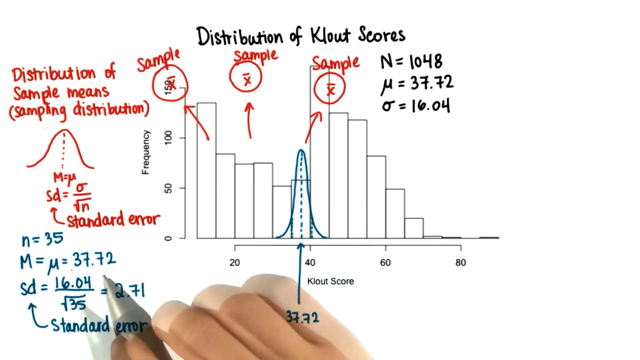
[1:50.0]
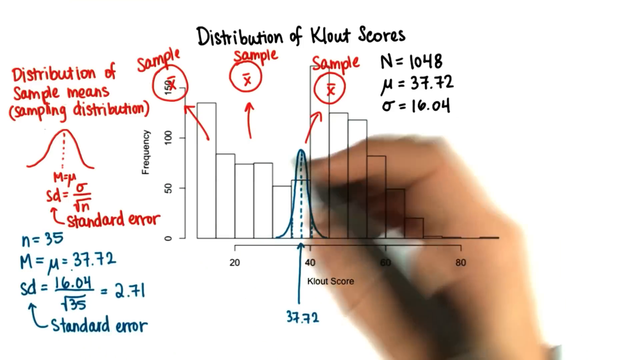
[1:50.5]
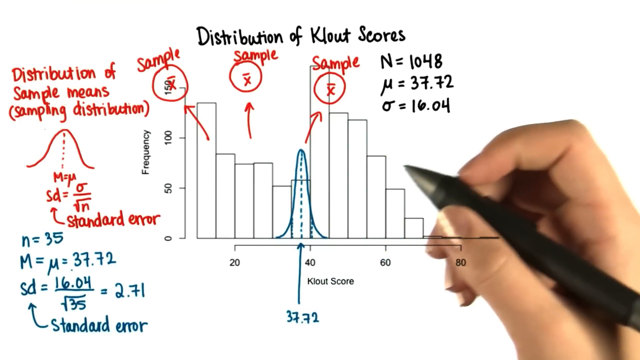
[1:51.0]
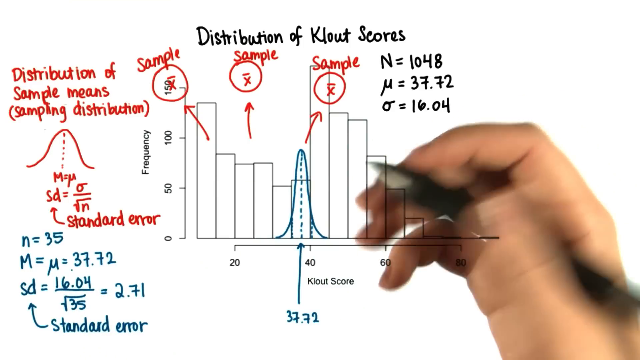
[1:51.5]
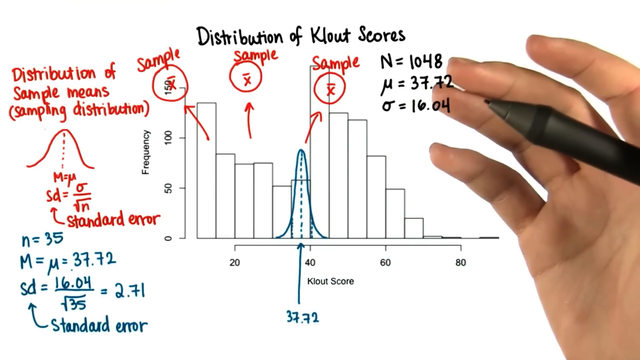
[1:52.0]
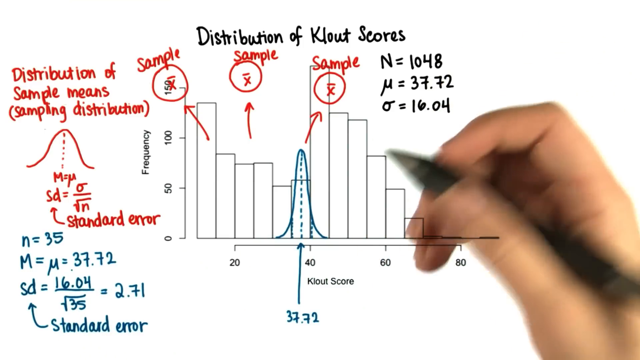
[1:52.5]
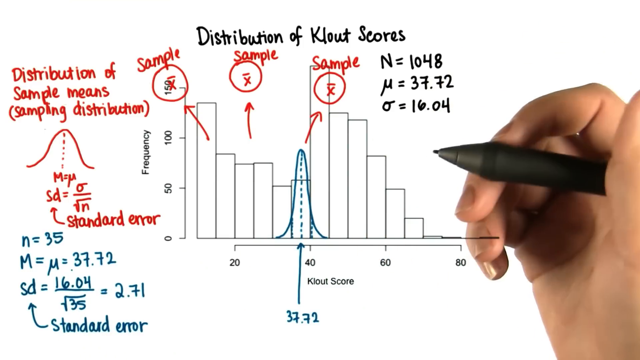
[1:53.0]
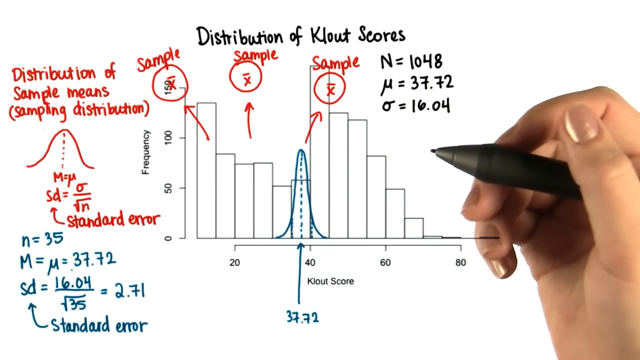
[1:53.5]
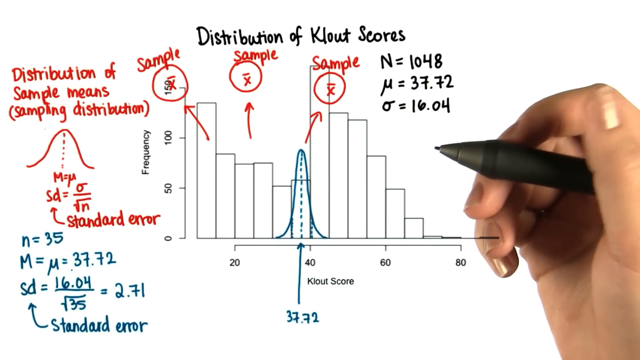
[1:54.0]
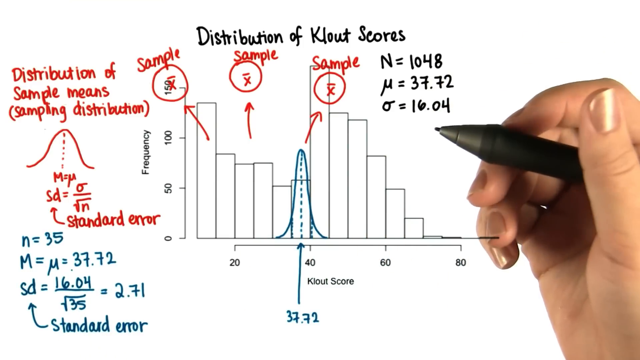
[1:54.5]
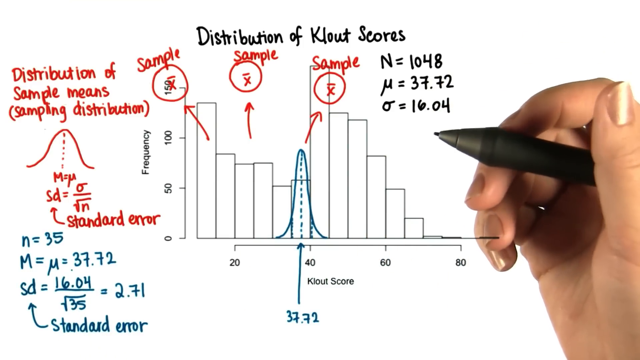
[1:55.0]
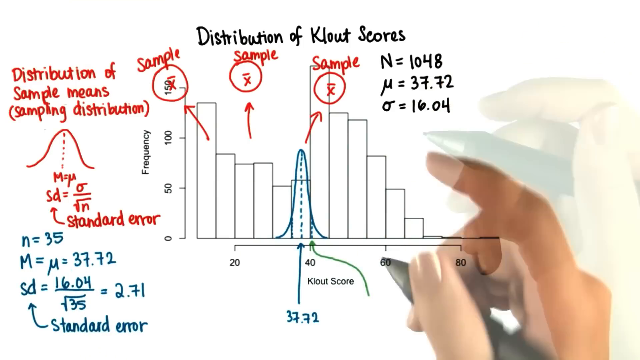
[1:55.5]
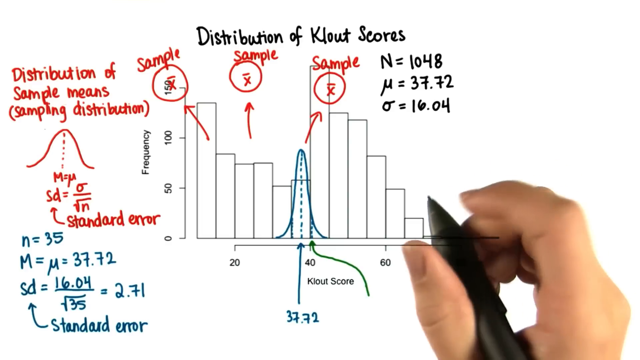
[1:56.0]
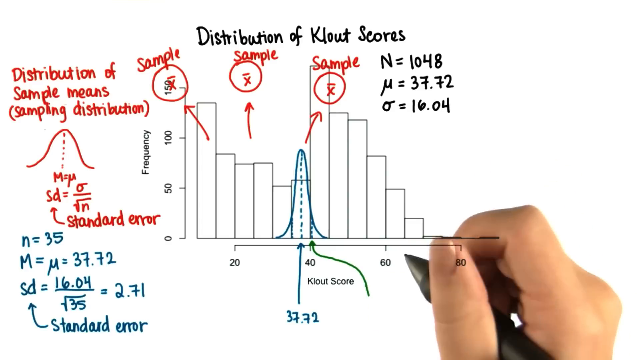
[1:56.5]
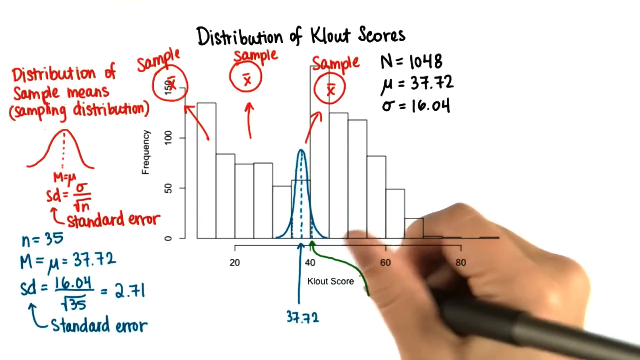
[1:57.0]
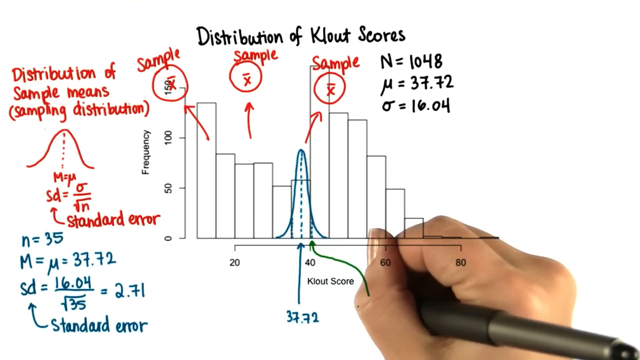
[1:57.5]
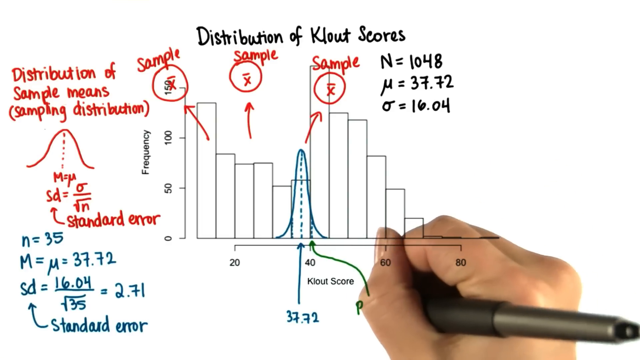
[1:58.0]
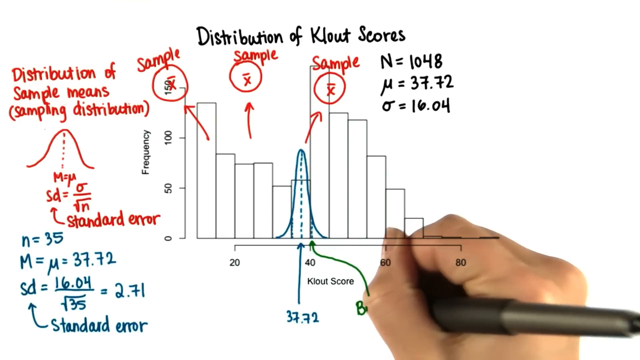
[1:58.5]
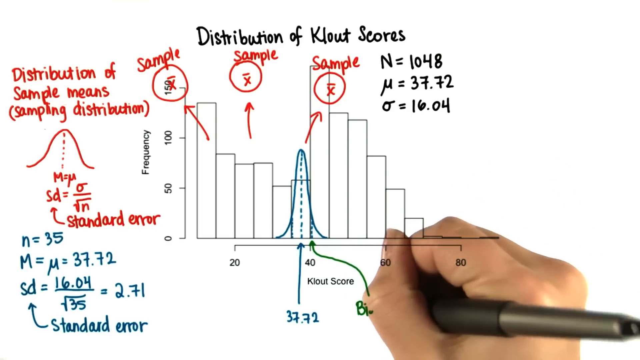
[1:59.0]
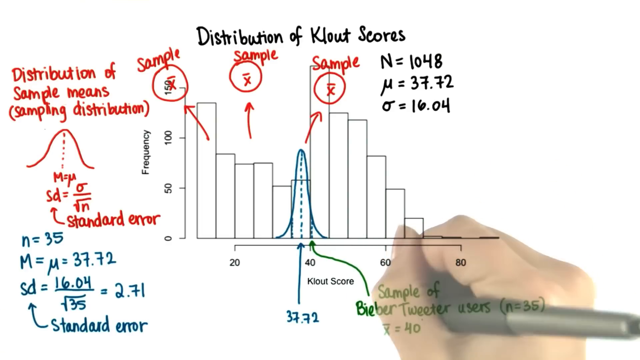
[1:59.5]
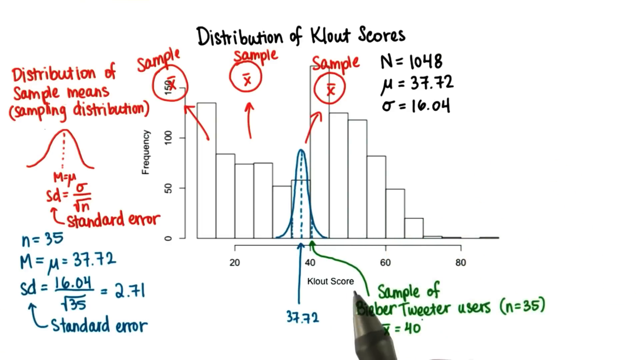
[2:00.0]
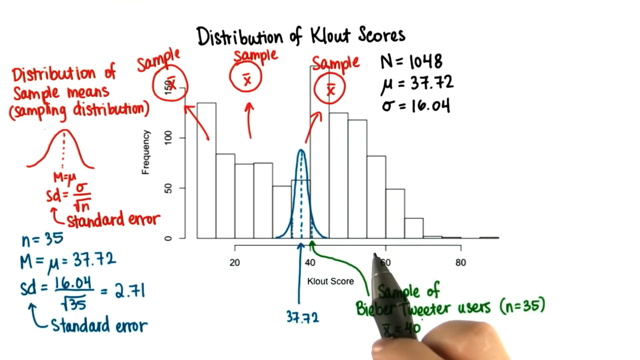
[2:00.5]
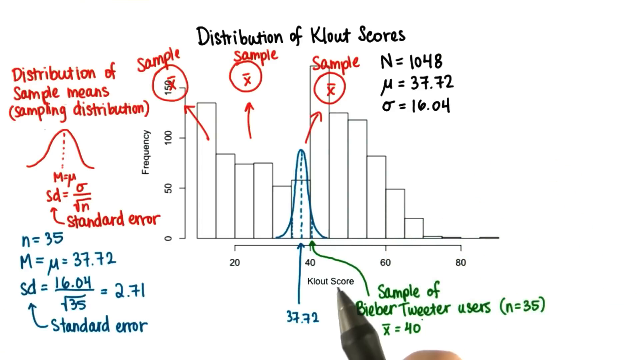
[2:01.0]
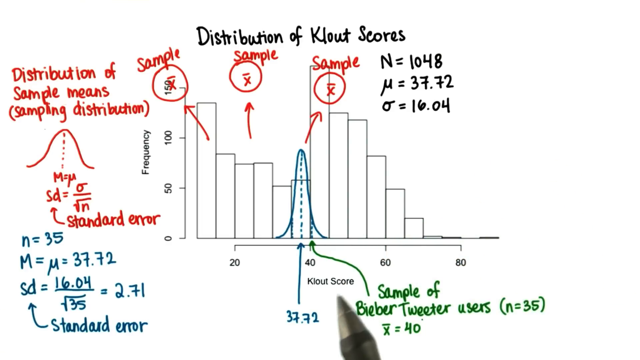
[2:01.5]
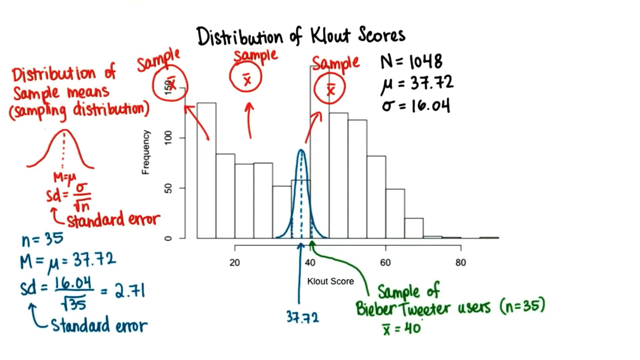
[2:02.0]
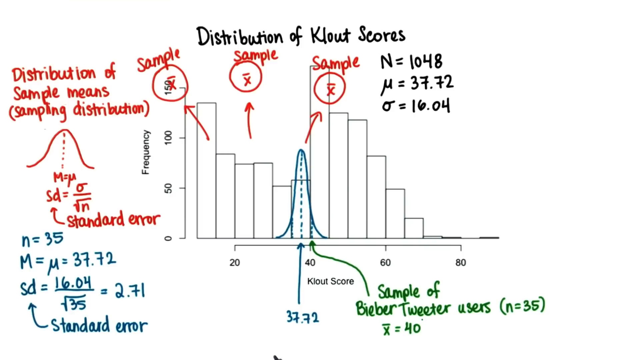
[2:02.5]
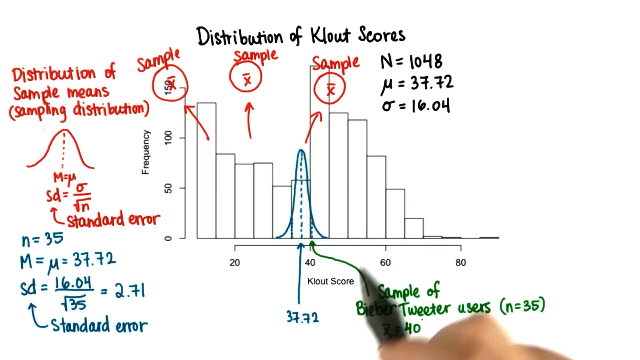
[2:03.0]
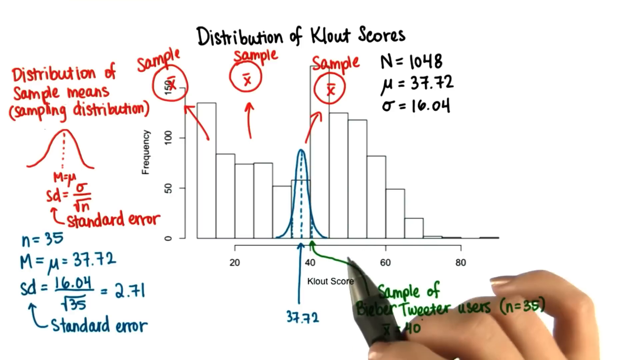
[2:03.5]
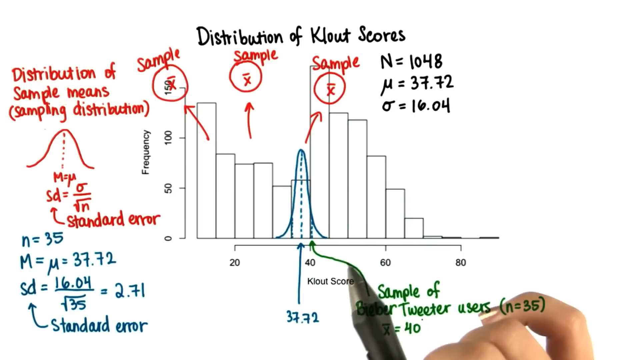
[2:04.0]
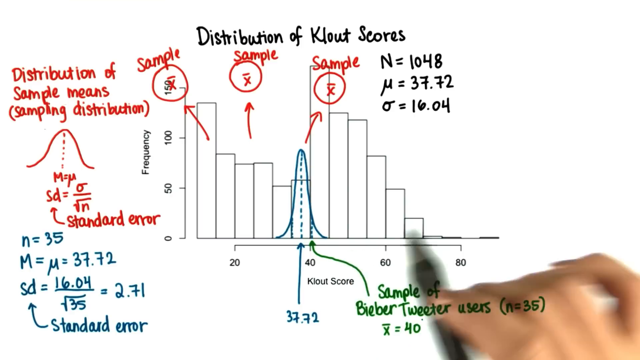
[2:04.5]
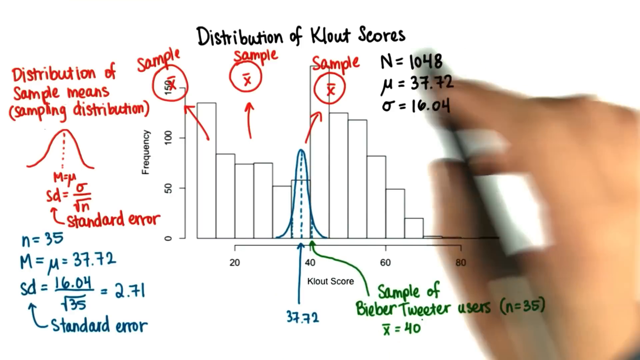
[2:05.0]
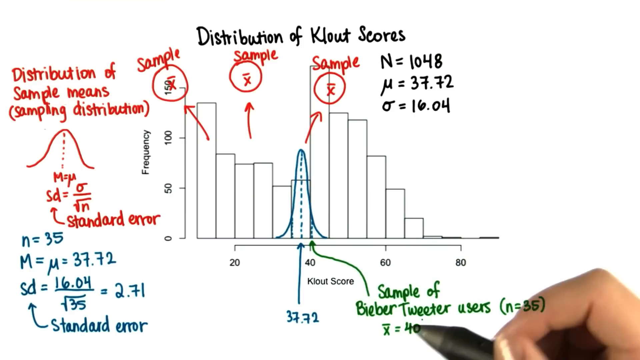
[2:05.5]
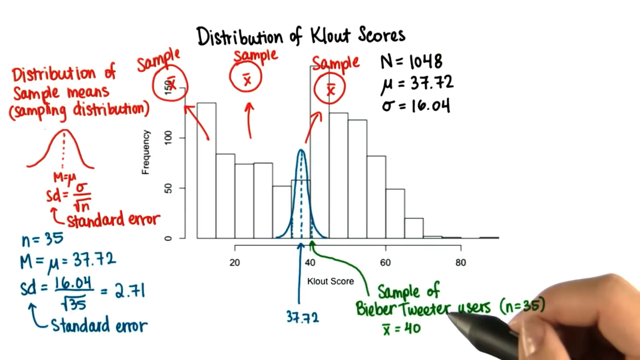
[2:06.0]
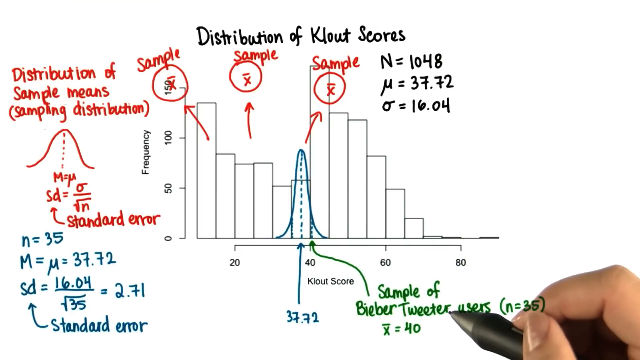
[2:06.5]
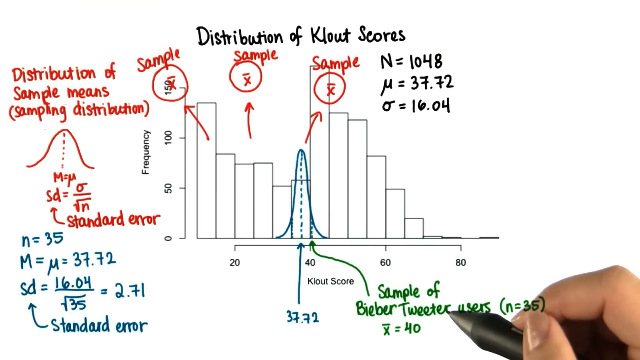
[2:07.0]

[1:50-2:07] The white background shows the bar graph titled "distribution of clout scores," with frequency on the vertical axis going up by 50 and clout scores on the horizontal axis going up by 20. All her writing is there: the black letters and their values; the red distribution of sample means, standard of error and its formula, and the sample arrows with an X with a line over it; and the blue "N = 35," "M =" lowercase u "= 3772," and the standard of error formula, 1604 divided by the square root of 35 equals 2.71, with the label at the bottom and an arrow pointing to it. The bell graph is still visible, with "37.32" between 20 and just past 40. She gestures, seeming unsure what to do, with her hand open; only her right hand is visible, and her fingernails are painted. She switches to green ink, and an arrow appears without her being seen drawing it, going up from the clout score to the blue bell graph. More writing then appears, only partly shown being written: "sample of Bieber tweeter users," "n = 35," and an x with a line "= 40." She then seems lost, making circles with her hand.